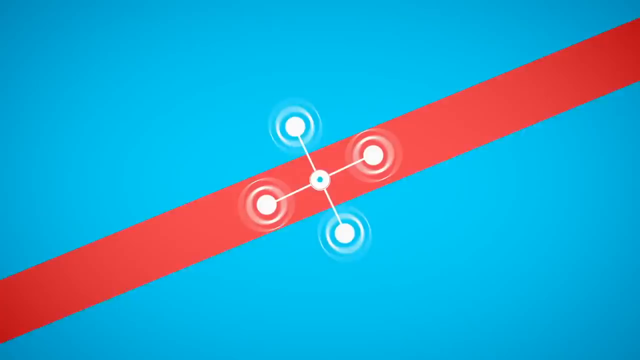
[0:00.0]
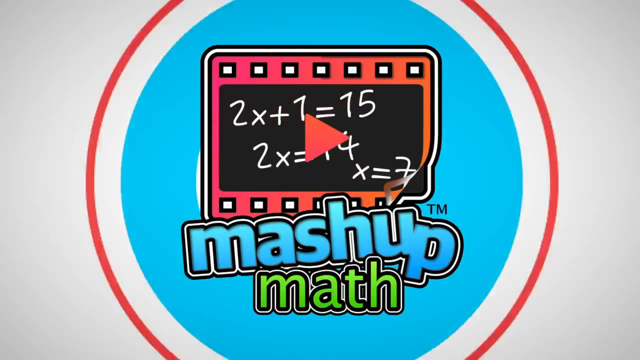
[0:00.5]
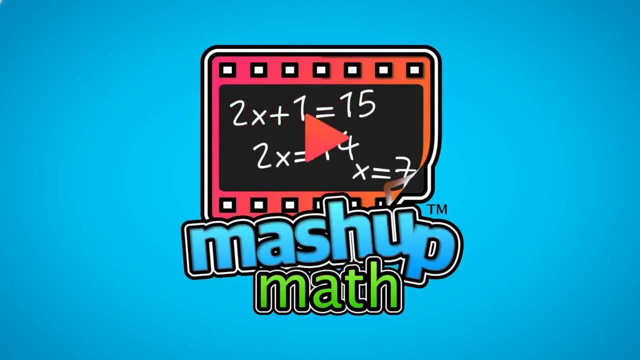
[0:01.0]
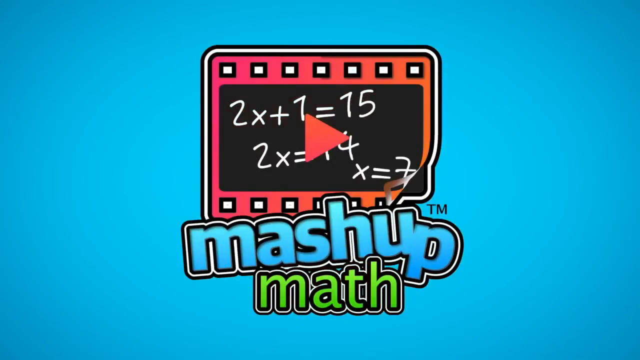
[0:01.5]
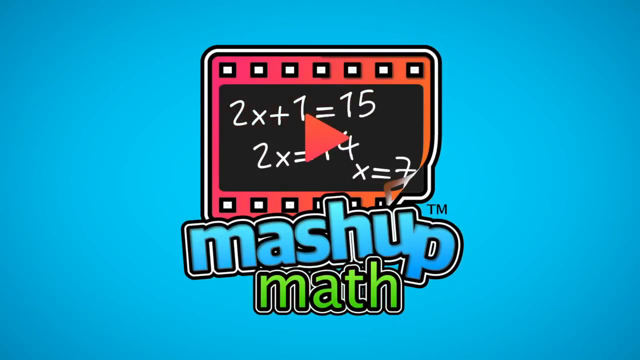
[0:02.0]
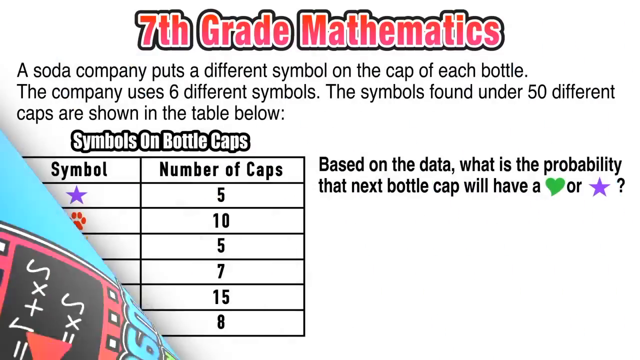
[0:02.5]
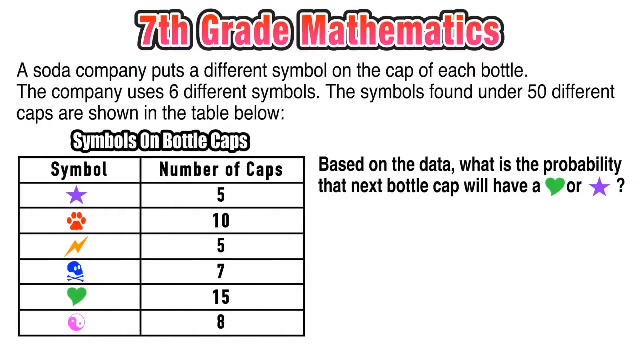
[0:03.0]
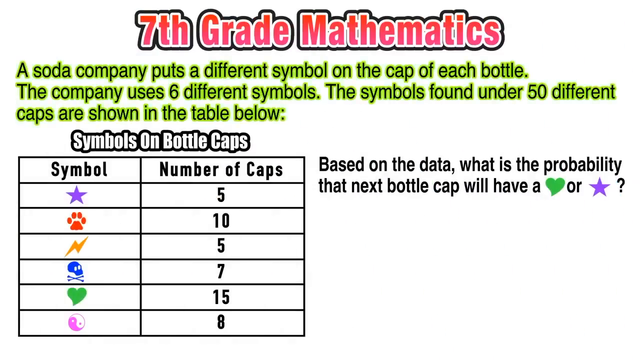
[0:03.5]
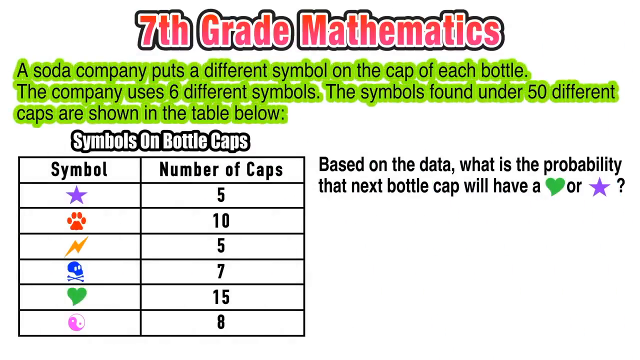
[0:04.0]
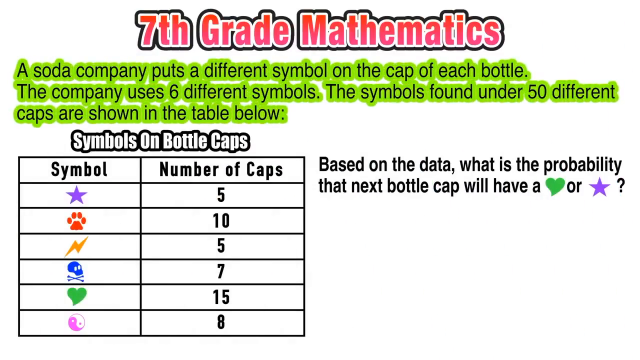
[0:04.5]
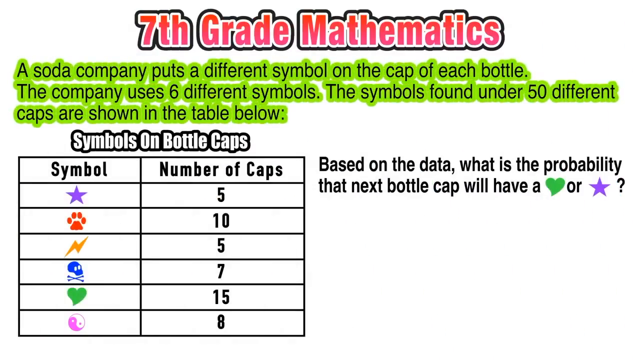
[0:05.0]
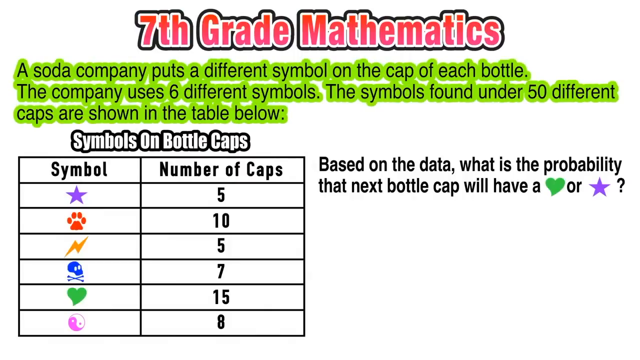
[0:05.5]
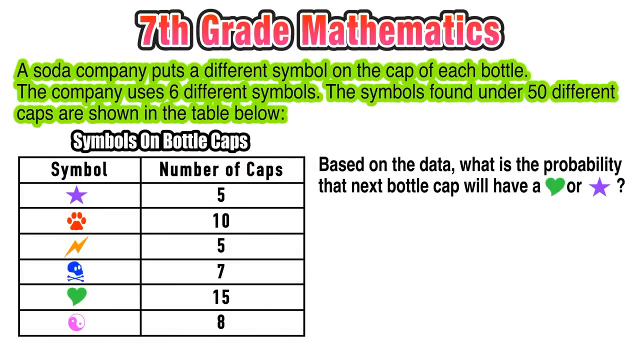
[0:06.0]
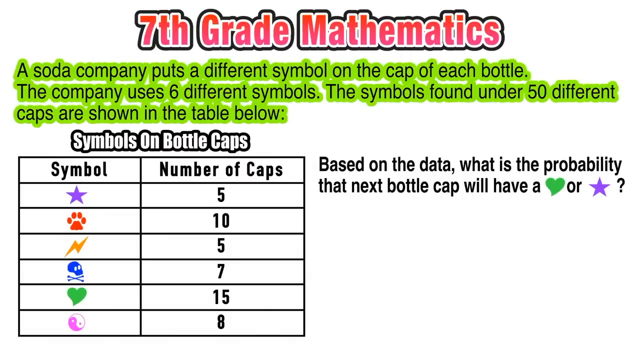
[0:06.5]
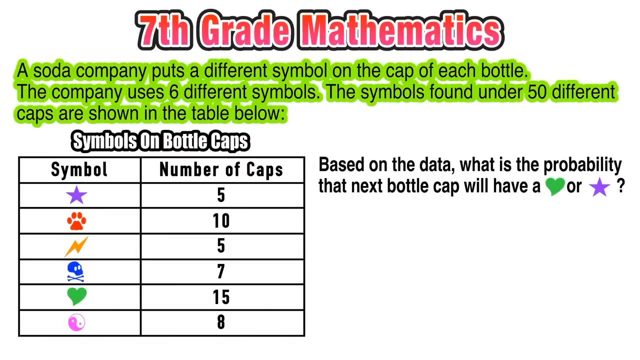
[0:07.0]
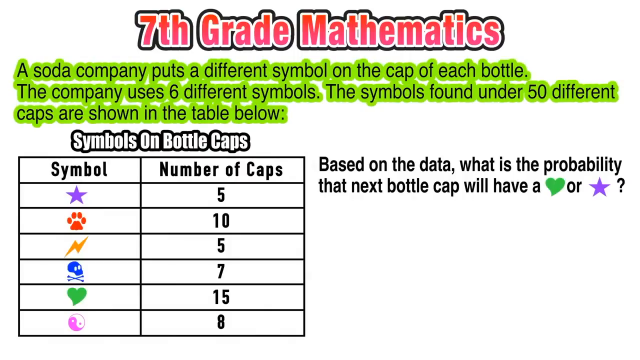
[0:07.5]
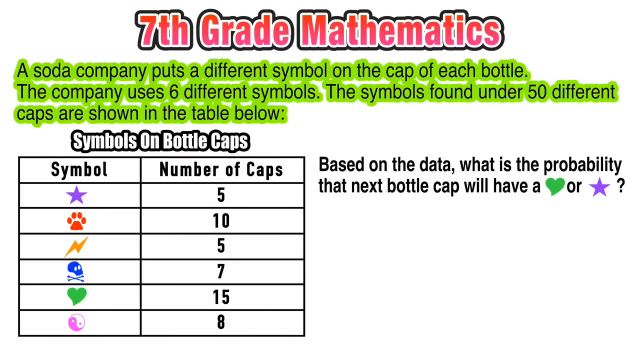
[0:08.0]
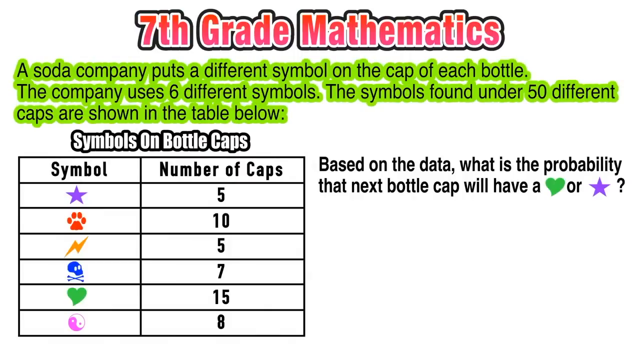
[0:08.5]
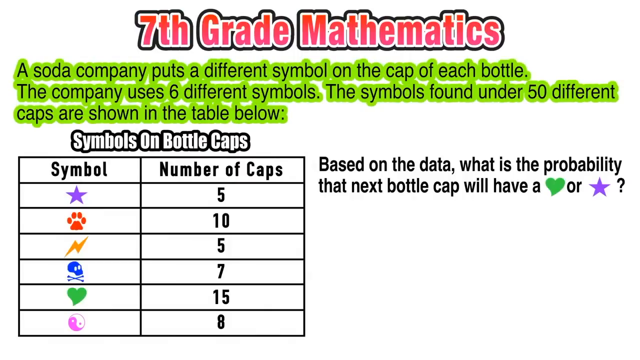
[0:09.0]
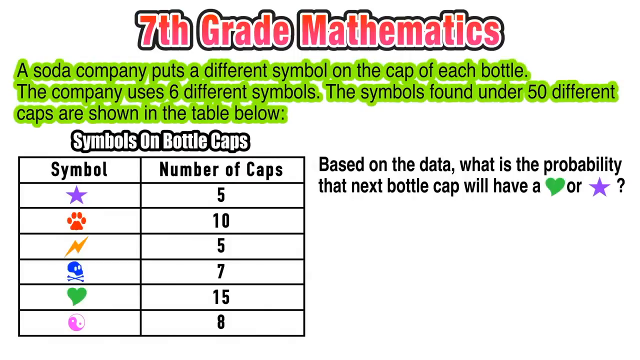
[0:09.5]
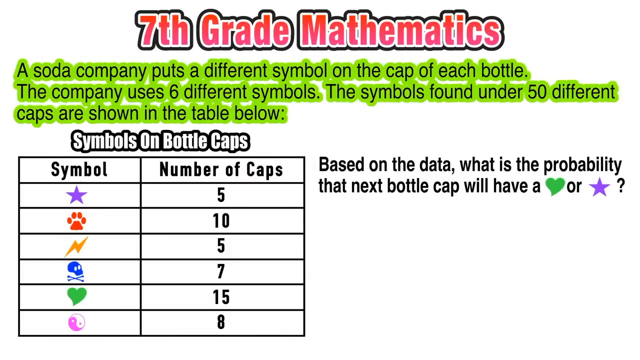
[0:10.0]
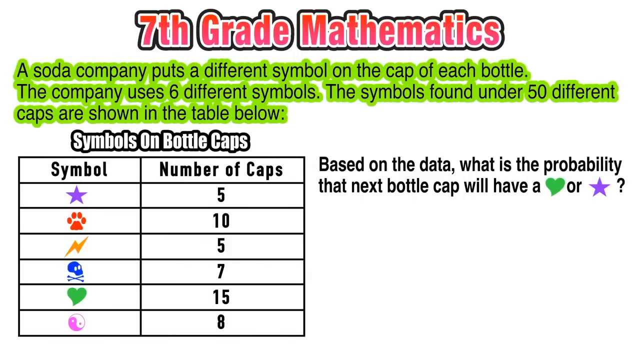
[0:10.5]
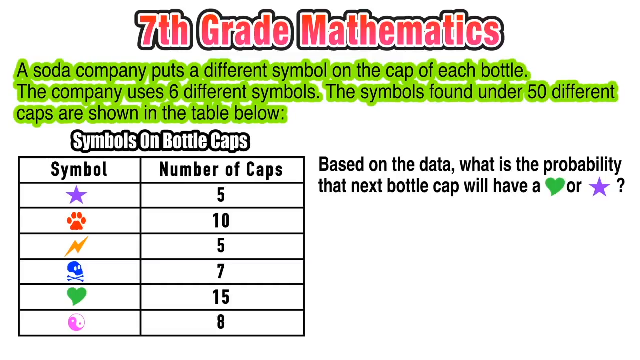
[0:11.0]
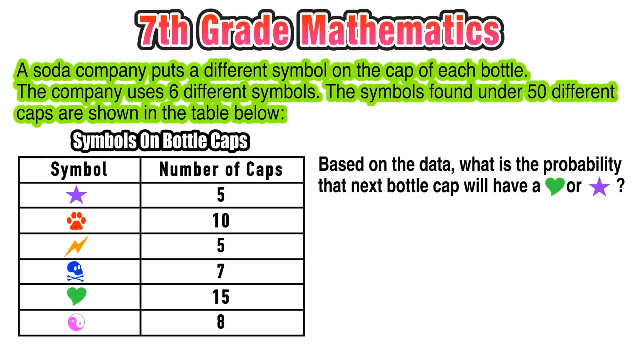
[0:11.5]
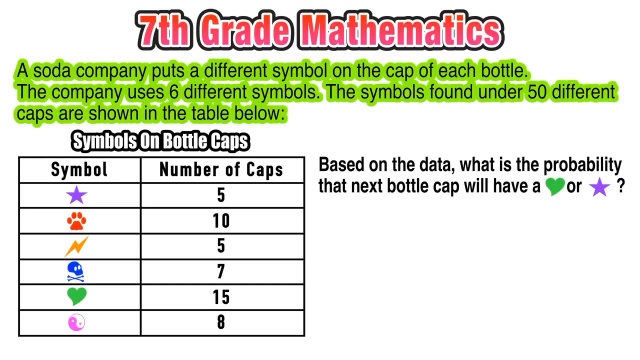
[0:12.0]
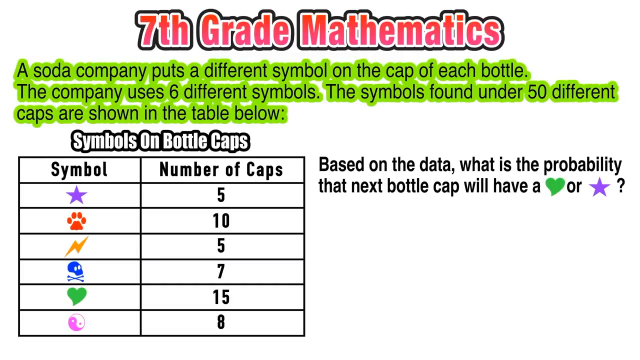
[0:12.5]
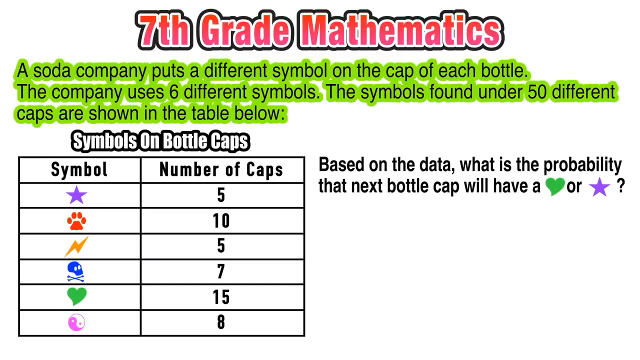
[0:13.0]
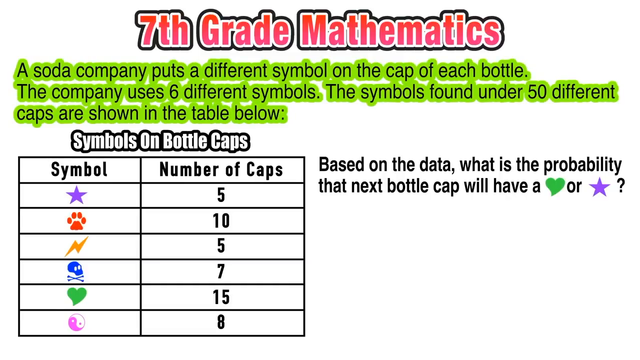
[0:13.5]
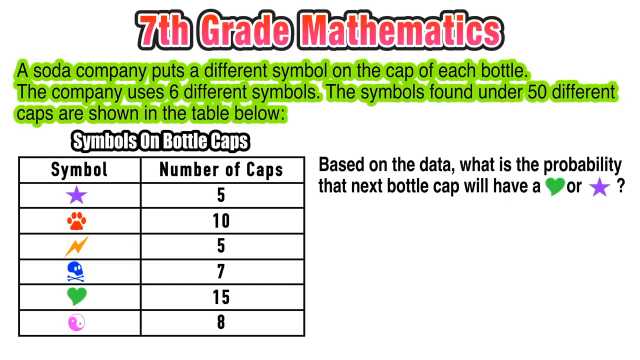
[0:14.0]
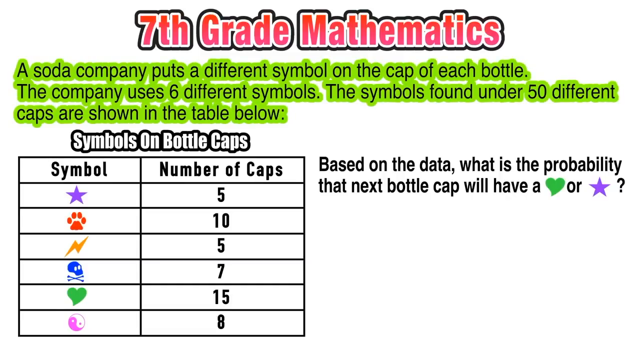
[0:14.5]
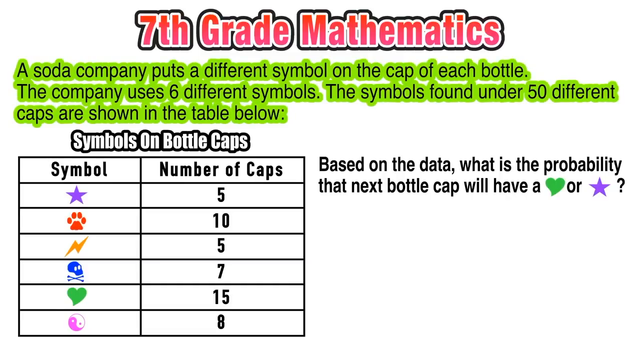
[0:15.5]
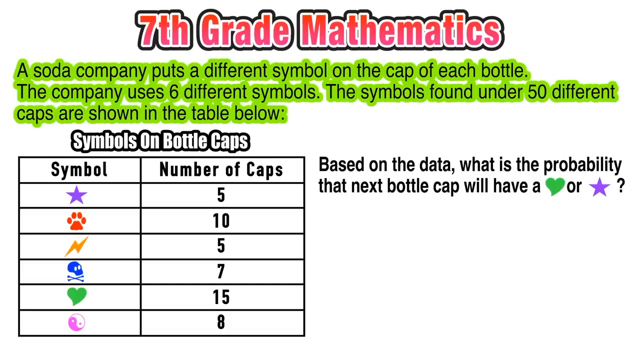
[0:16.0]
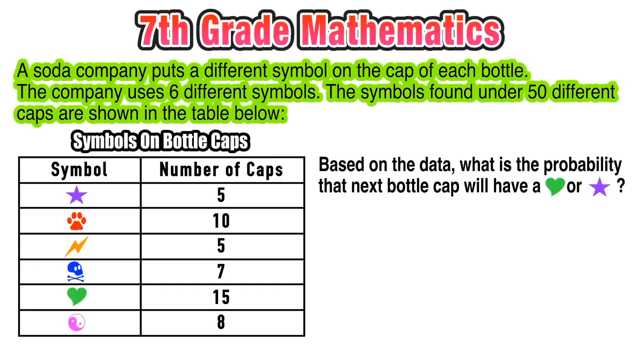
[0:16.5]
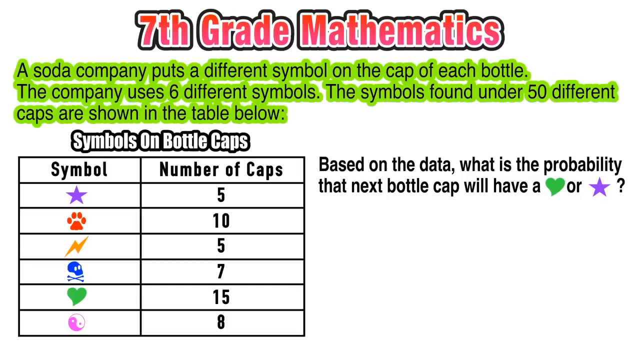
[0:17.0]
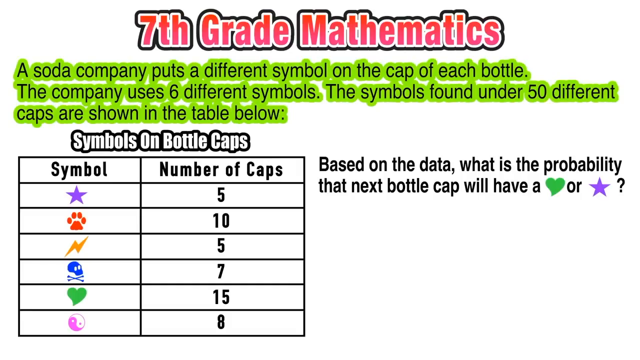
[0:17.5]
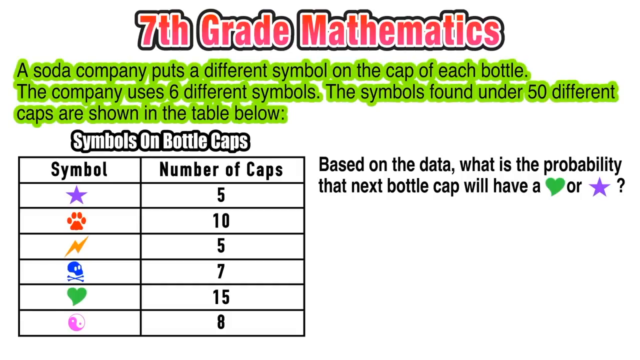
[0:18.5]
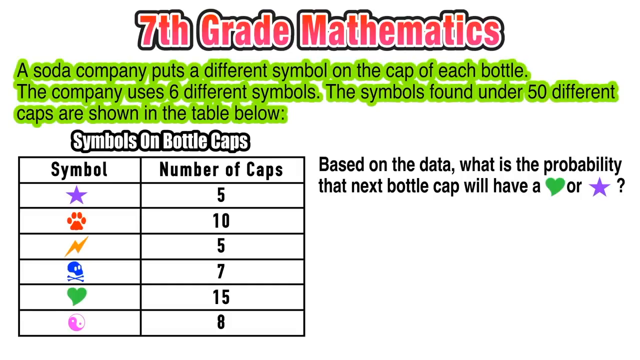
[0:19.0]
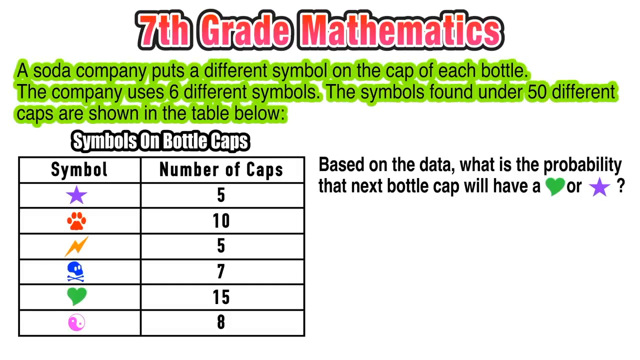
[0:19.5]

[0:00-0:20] A light blue screen appears with a red strip that looks like a ribbon stretching from one corner on the left side to the top corner on the right side. In the middle, a white thing that appears to have four legs is centered in the image. Then "Mashup, grade 7 mathematics" appears, written in red, along with text stating that a soda company puts different symbols on the cap of each bottle, that the company uses 6 different symbols, and that the symbols found under 50 different caps are shown in the diagram. A diagram shows symbols on one part and, on the other part, numbers of caps: 5, 10, 5, 7, 15 and 8. The question written on the screen reads "based on the data, what is the probability that the next bottle cap will have a heart or a star". The background is grayish.